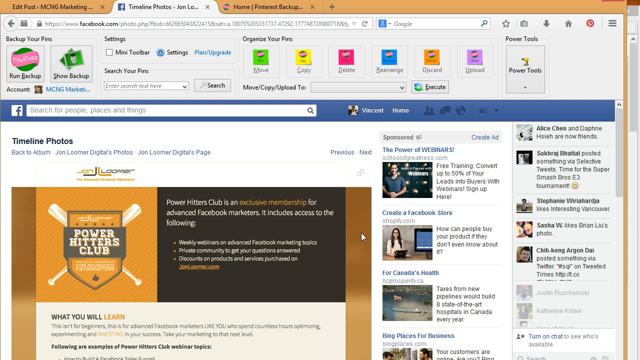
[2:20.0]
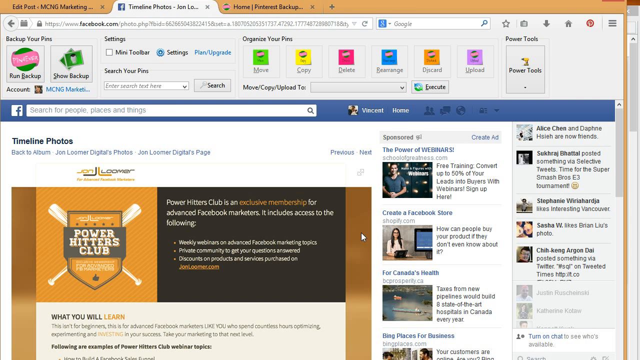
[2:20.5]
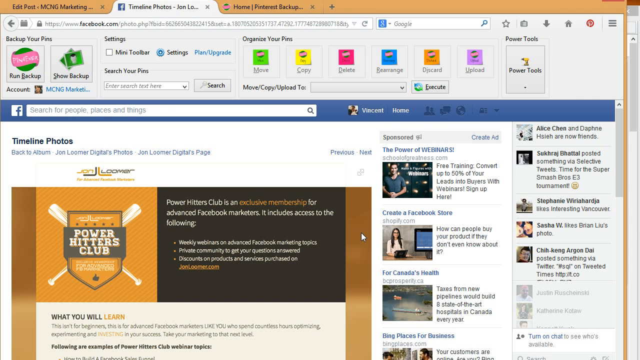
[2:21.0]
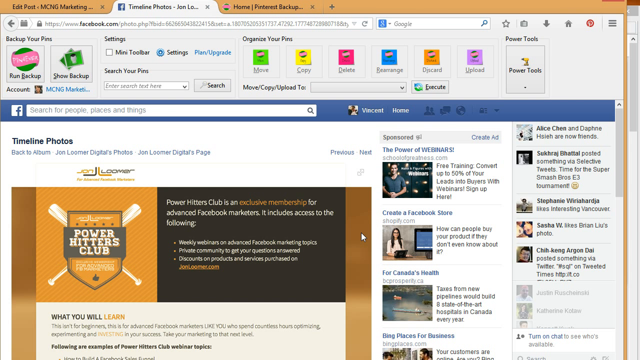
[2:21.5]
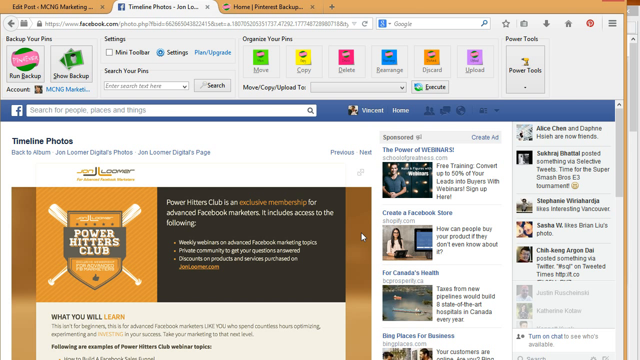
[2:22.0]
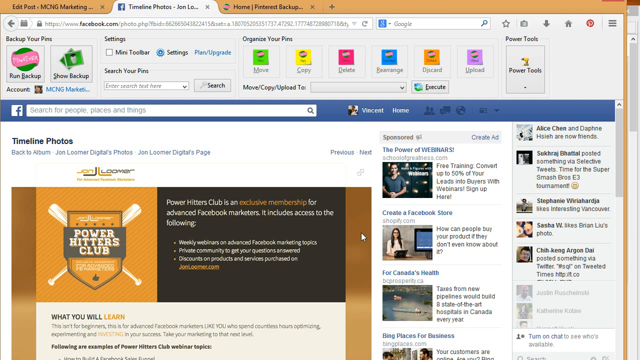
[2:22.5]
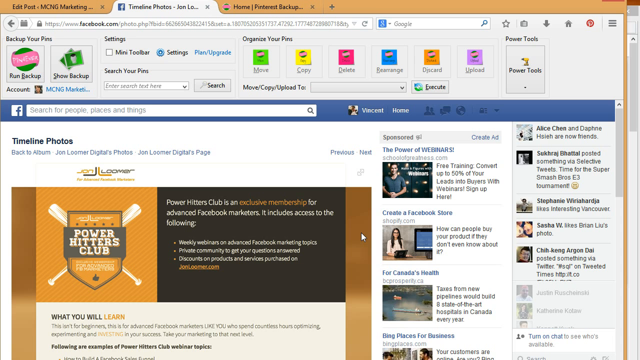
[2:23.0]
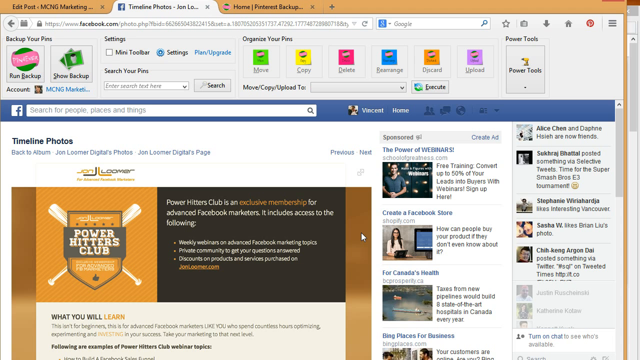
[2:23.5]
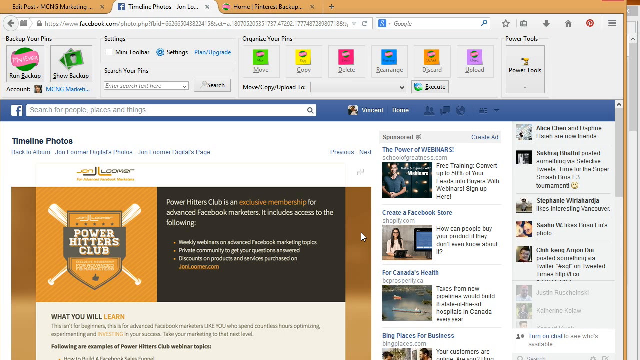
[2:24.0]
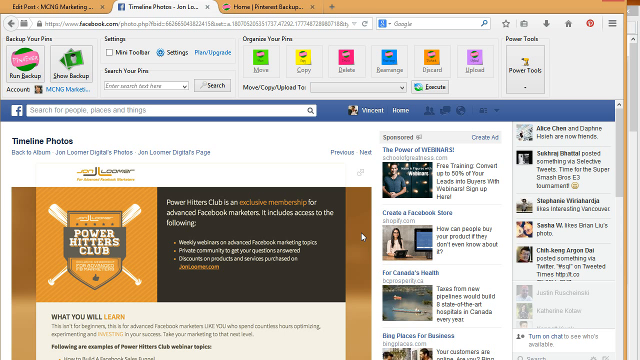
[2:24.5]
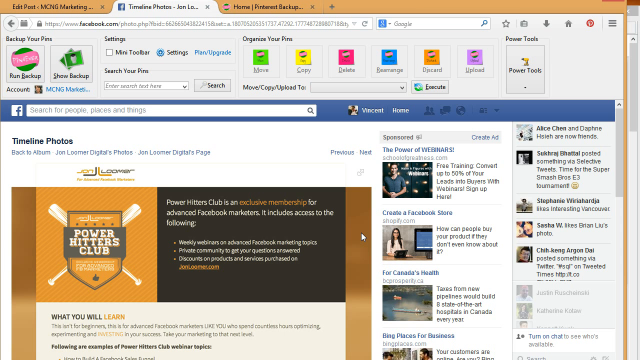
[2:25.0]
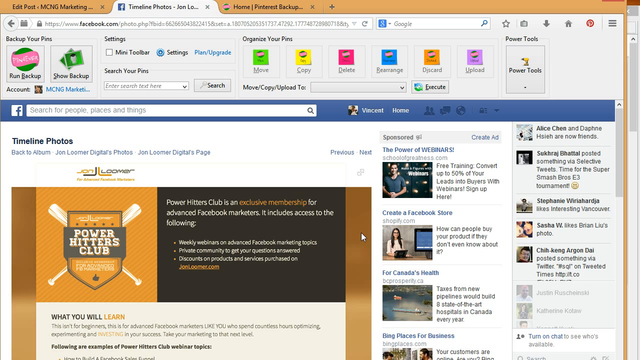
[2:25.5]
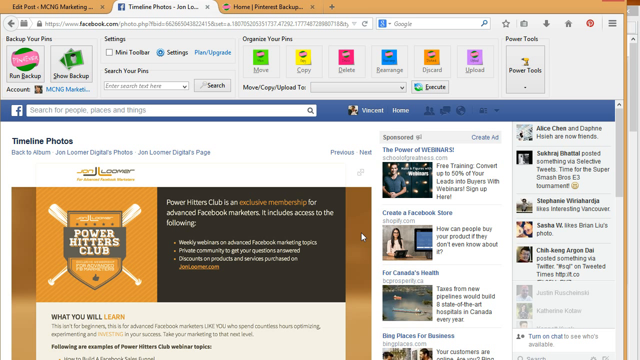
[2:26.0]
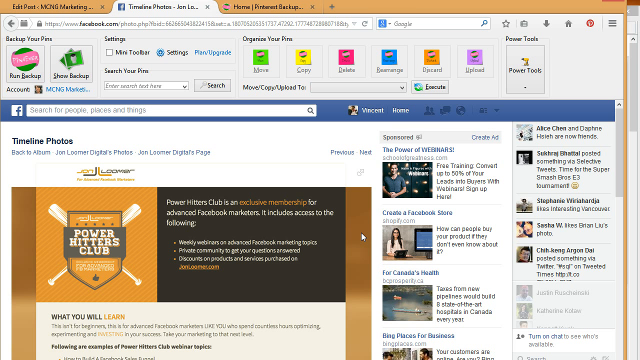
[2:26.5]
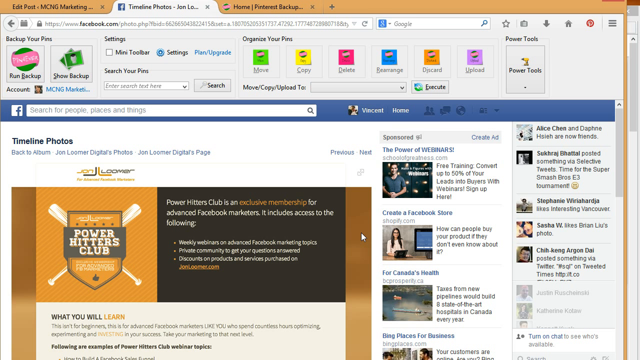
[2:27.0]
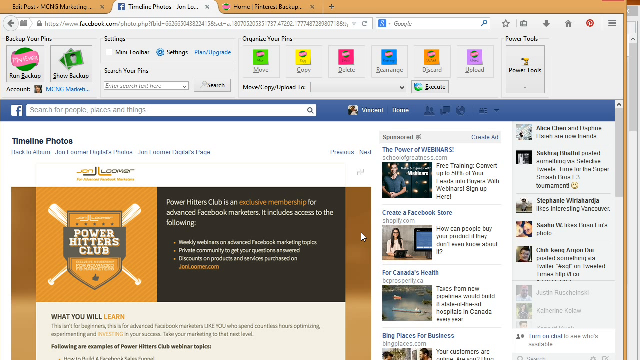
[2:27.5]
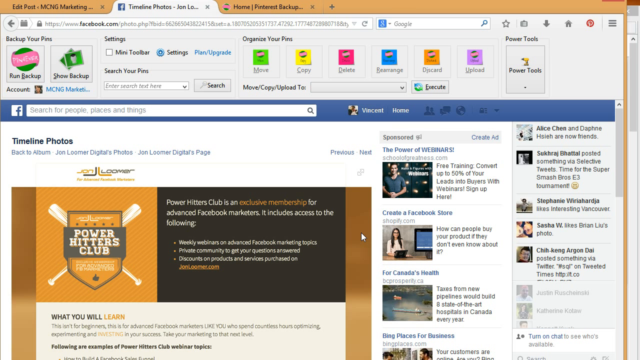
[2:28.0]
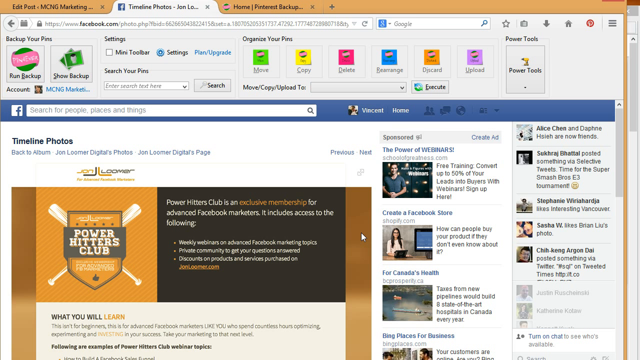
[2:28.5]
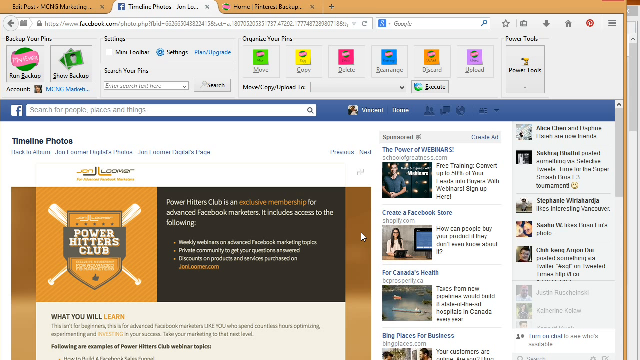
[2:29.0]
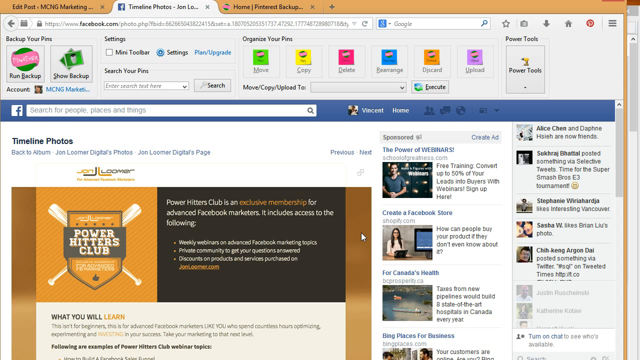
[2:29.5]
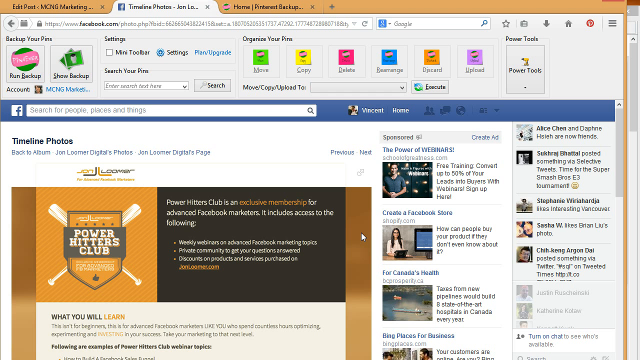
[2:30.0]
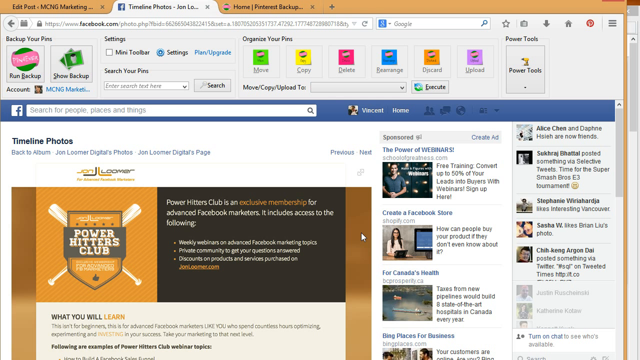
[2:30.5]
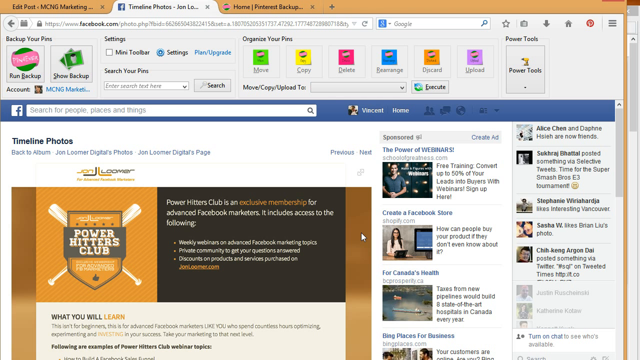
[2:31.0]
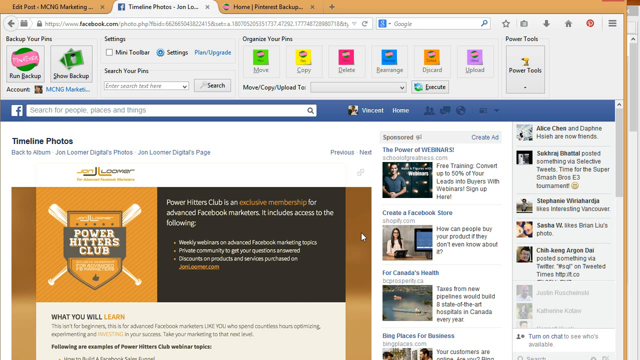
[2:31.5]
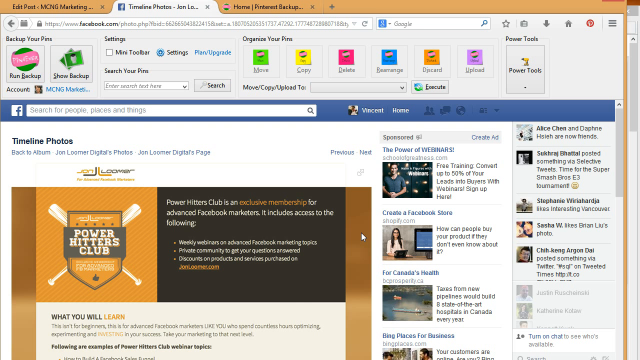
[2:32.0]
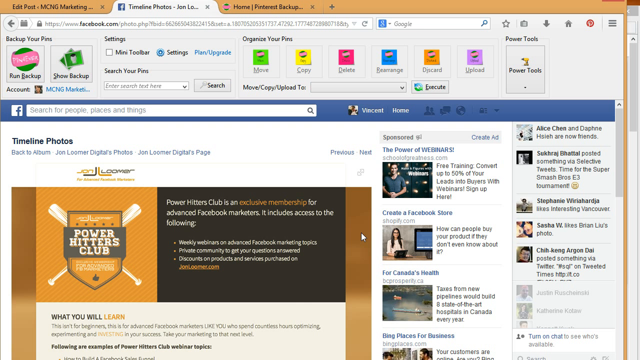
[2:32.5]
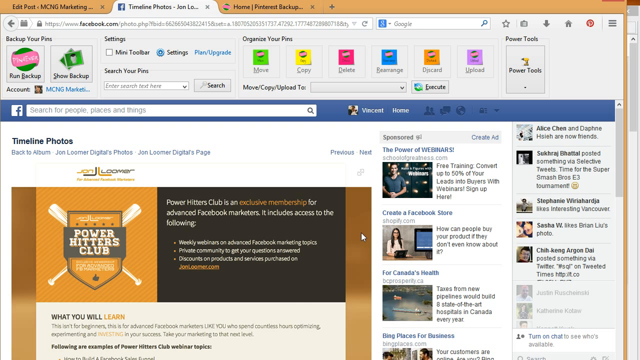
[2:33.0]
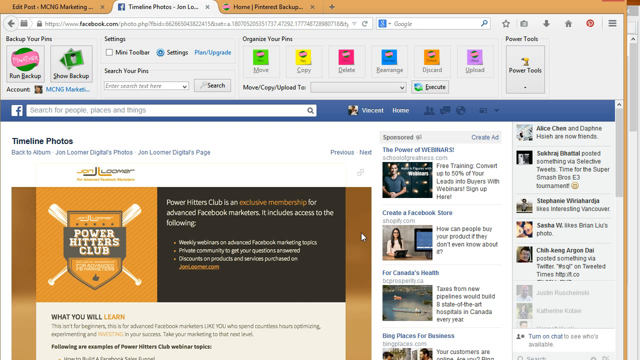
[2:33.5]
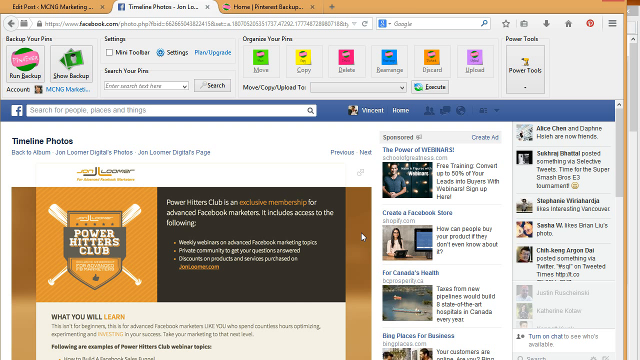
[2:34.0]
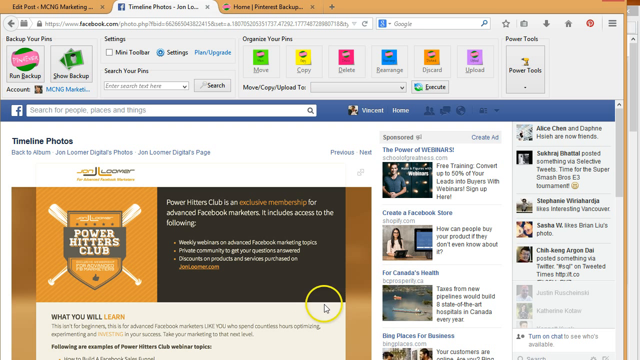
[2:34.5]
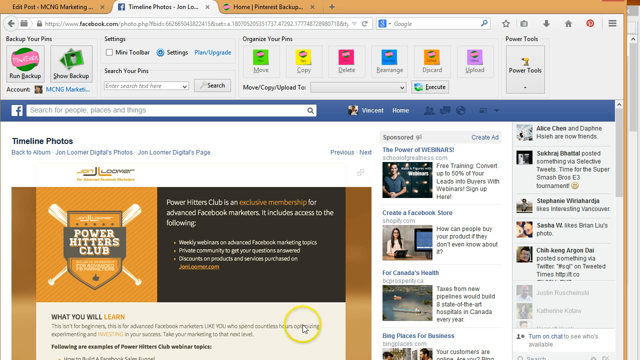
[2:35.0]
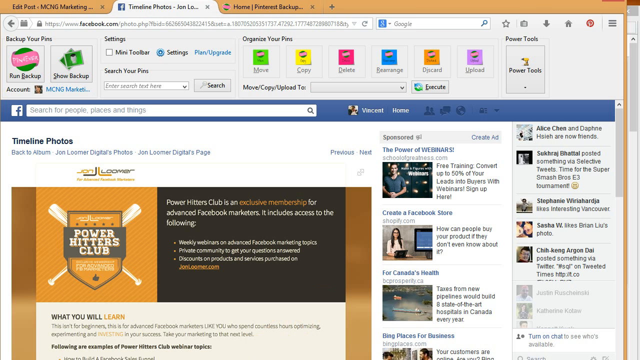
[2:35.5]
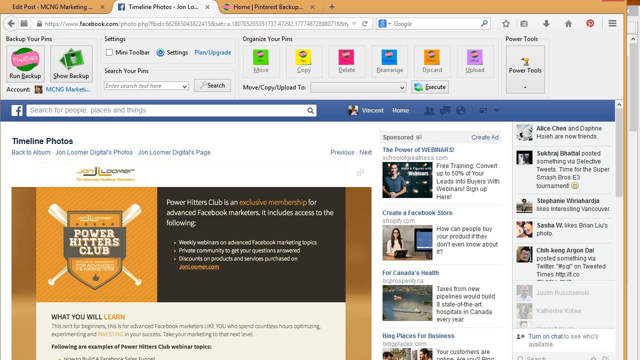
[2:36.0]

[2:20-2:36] A website shows timeline photos, specifically the Power Hitters Club page. Text says it "is an exclusive membership for advanced Facebook marketers. It includes access to the following", followed by a list of what it includes. The page has a brown background with two crisscrossed baseball bats and an insignia reading "Power Hitters Club". Sponsored ads are to the right of this information. The top of the screen reads "back up your pins, settings, organize your pins, and power tools". A cursor with a yellow circle around it moves around the screen, then stays stationary in the border on the right-hand side of the Power Hitters Club page, not moving at all.